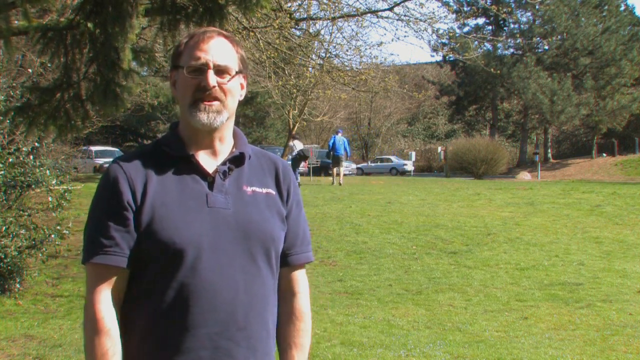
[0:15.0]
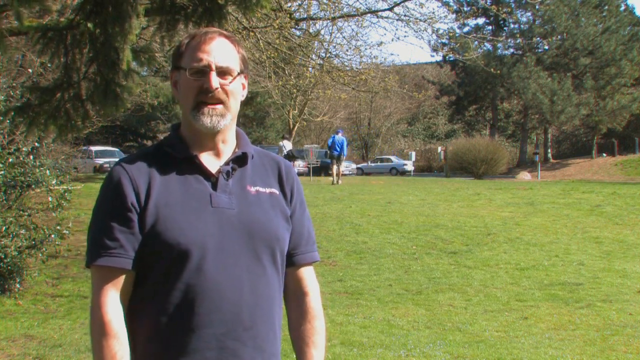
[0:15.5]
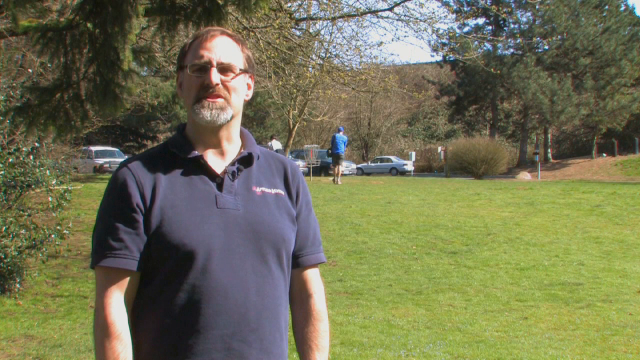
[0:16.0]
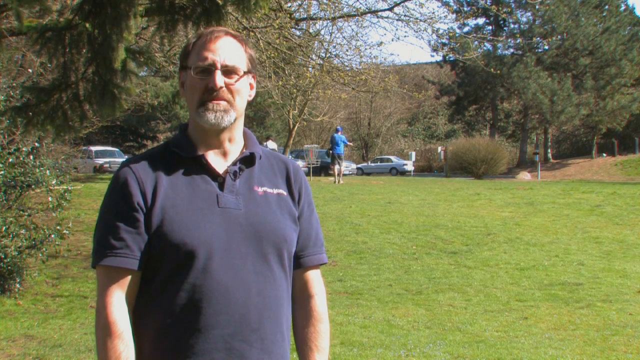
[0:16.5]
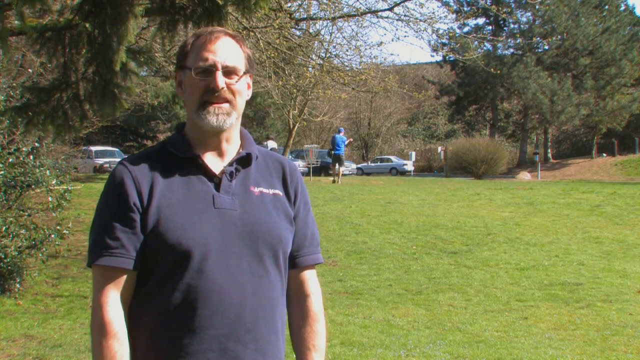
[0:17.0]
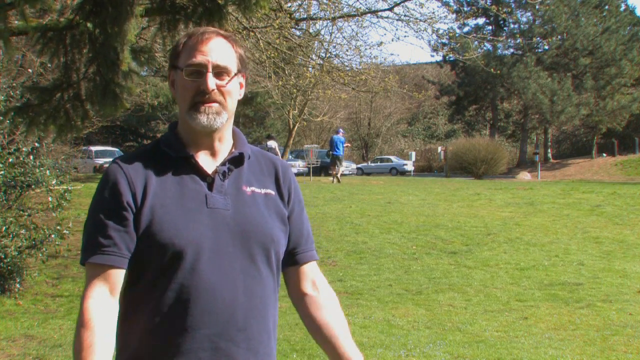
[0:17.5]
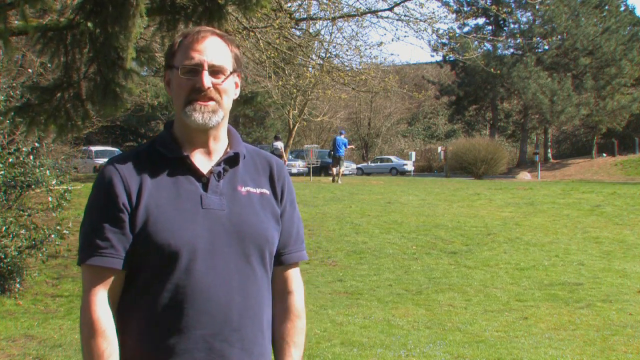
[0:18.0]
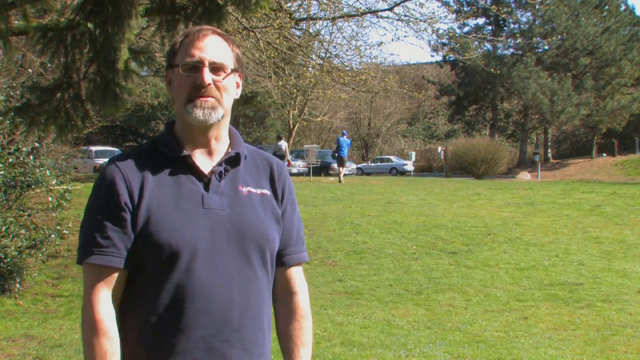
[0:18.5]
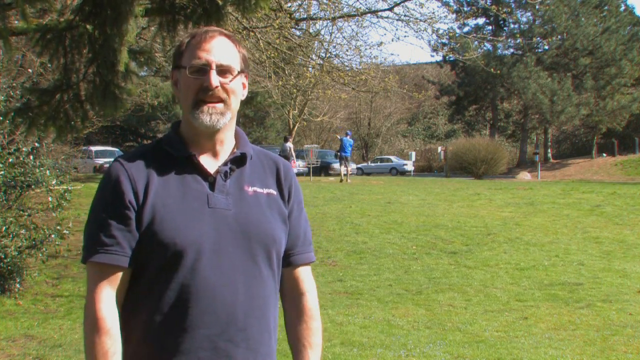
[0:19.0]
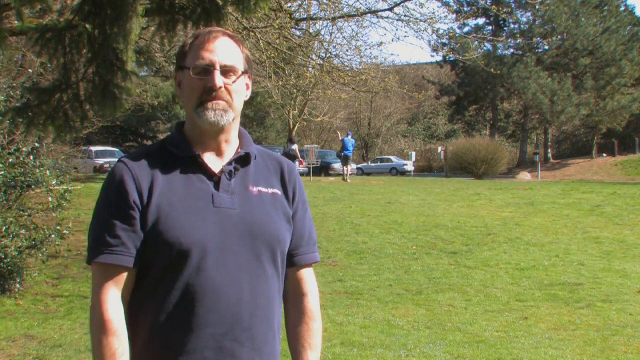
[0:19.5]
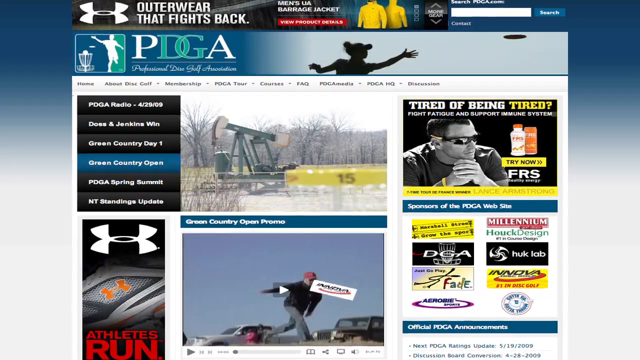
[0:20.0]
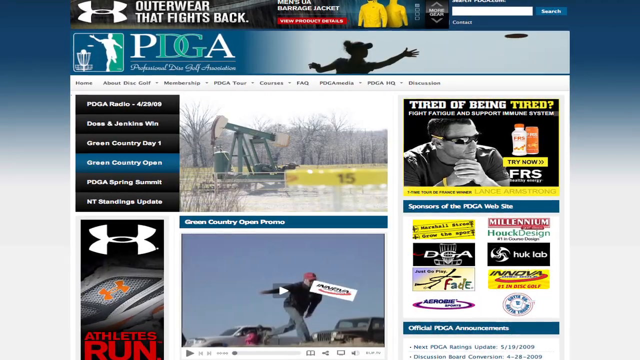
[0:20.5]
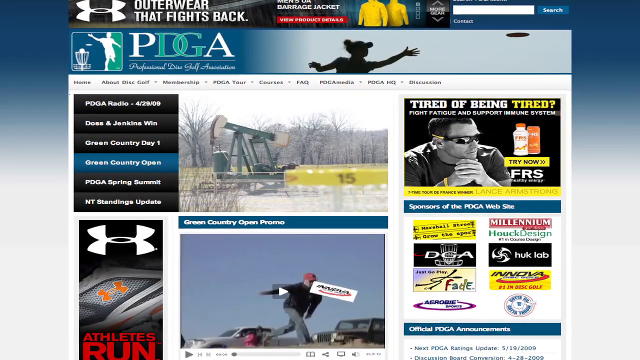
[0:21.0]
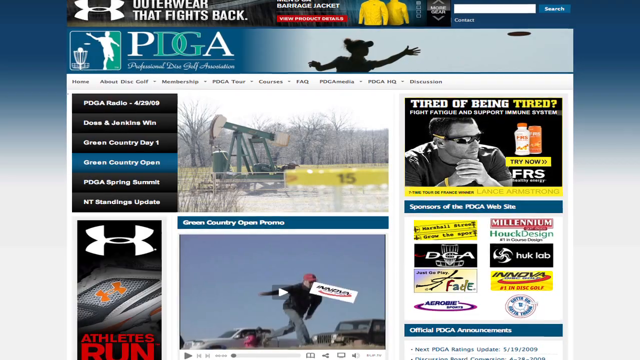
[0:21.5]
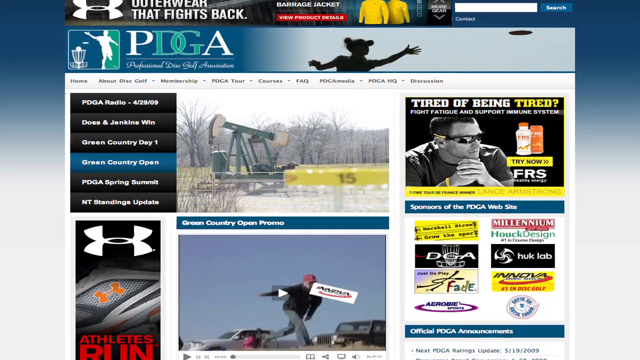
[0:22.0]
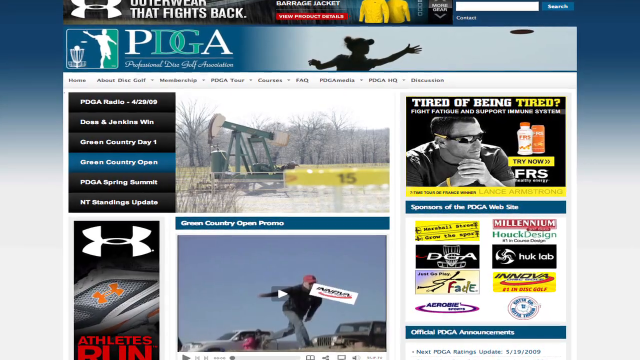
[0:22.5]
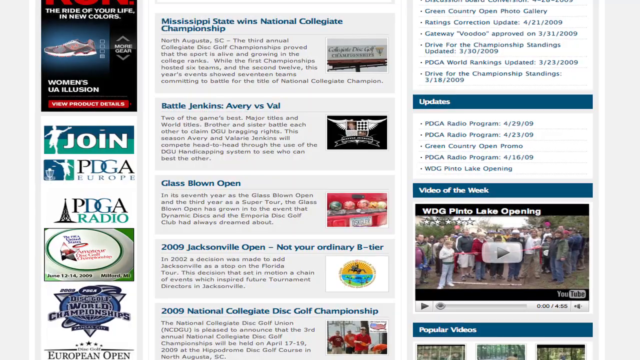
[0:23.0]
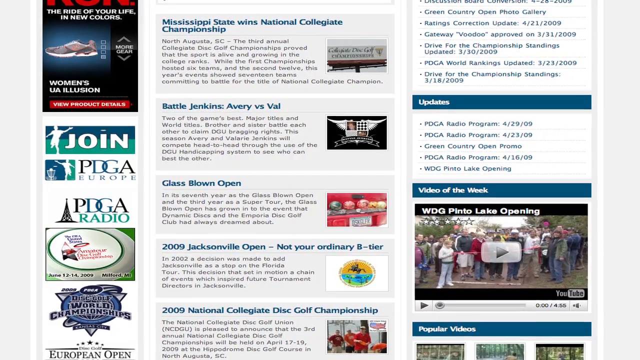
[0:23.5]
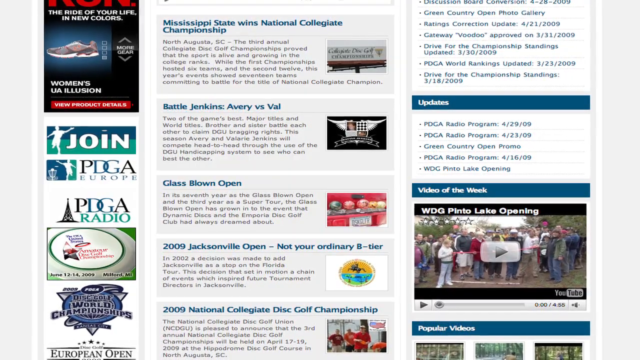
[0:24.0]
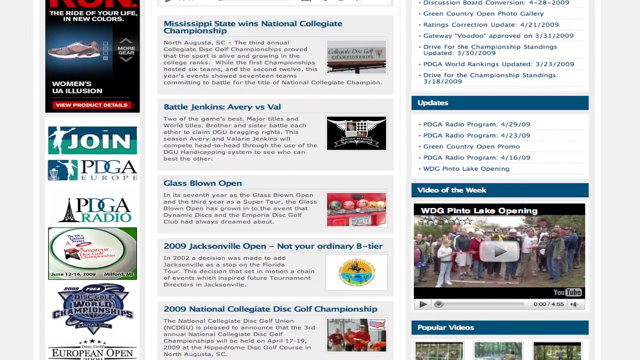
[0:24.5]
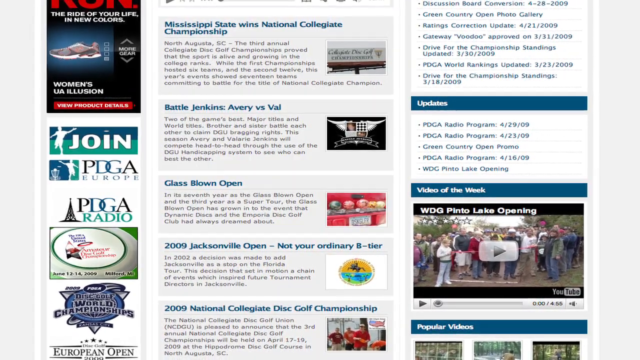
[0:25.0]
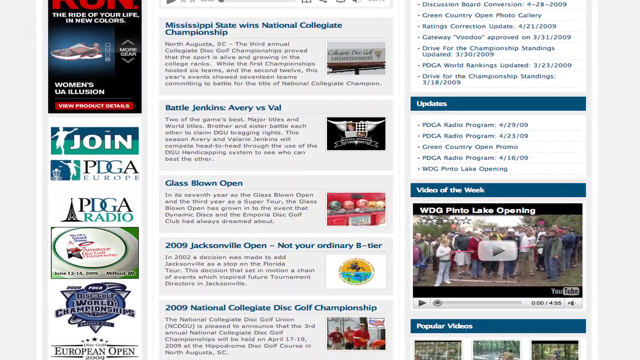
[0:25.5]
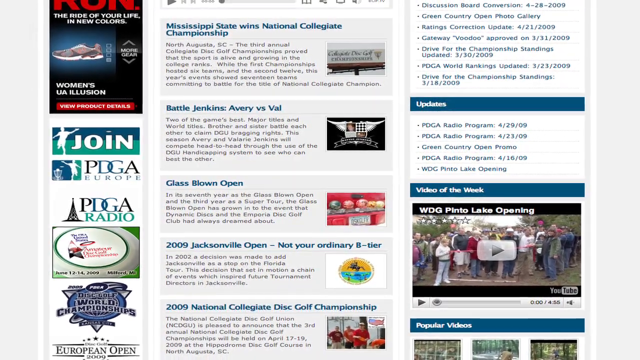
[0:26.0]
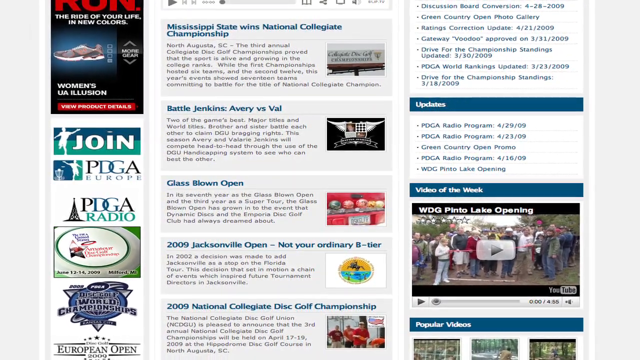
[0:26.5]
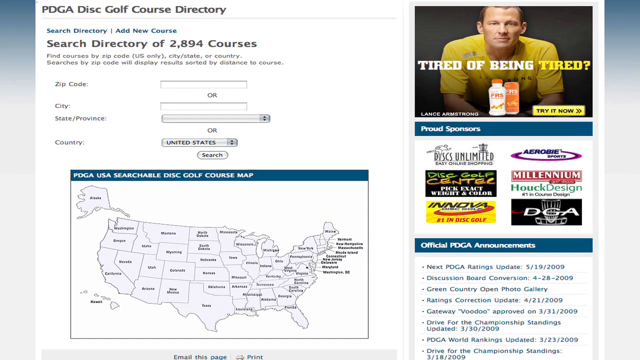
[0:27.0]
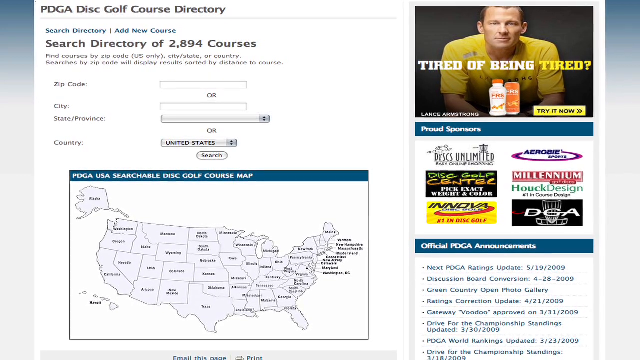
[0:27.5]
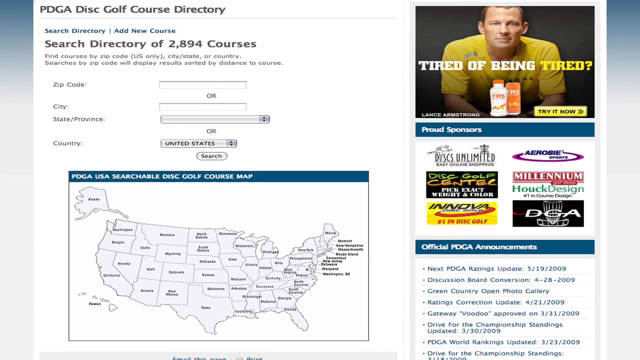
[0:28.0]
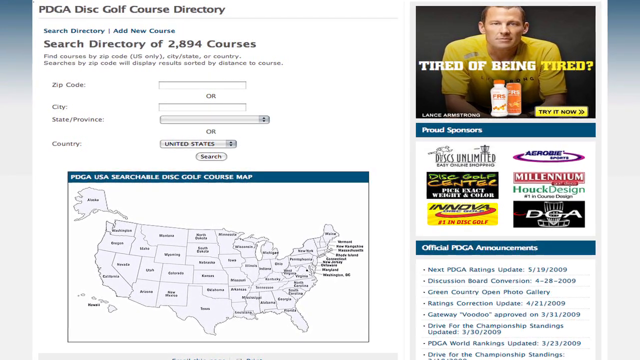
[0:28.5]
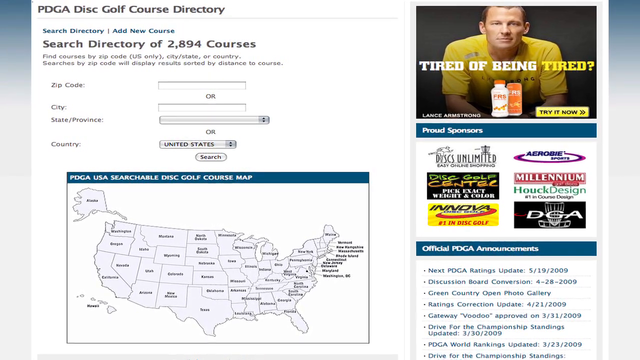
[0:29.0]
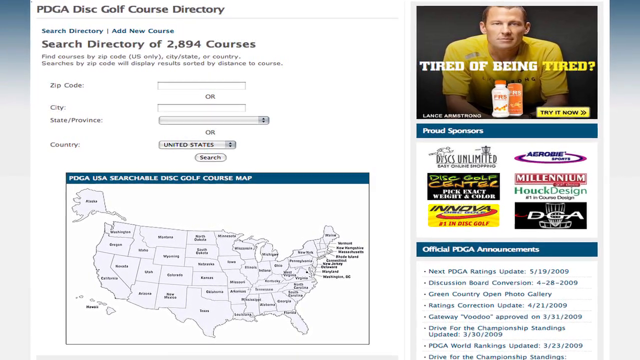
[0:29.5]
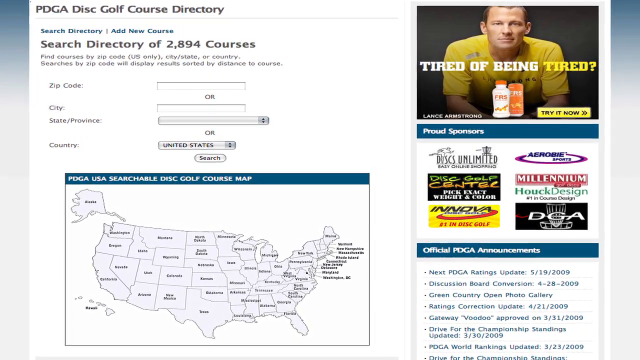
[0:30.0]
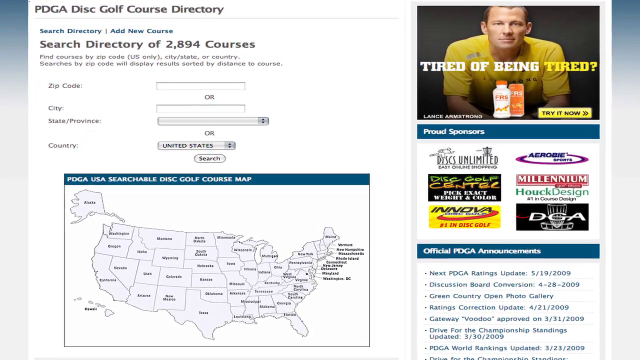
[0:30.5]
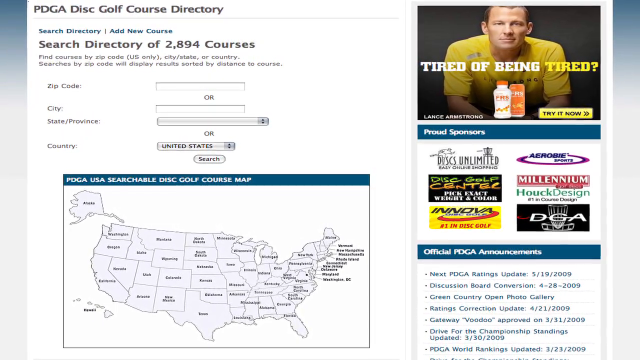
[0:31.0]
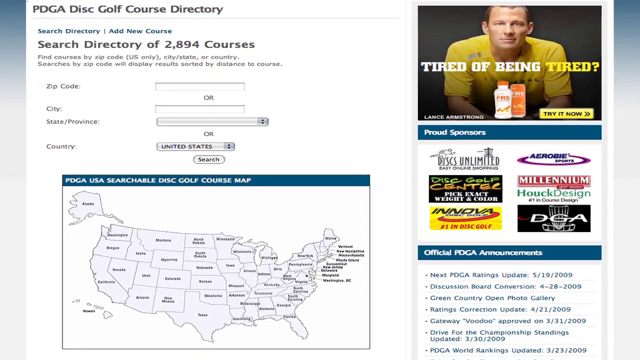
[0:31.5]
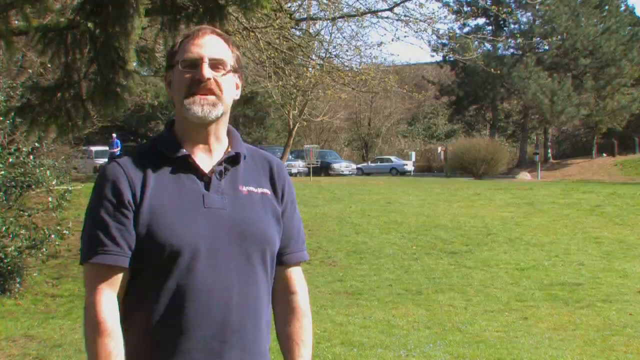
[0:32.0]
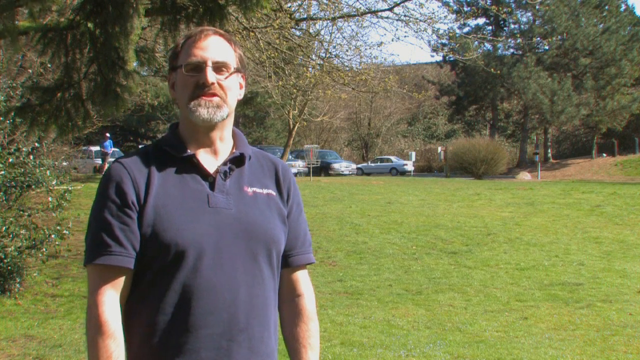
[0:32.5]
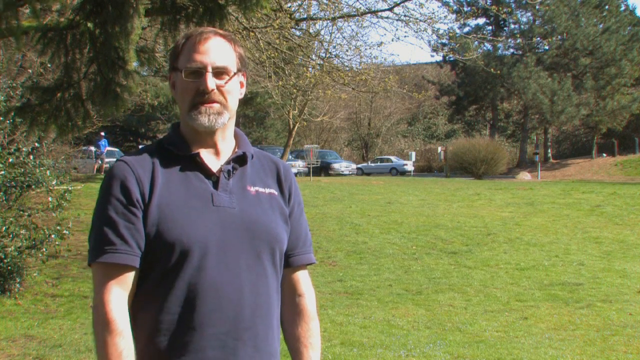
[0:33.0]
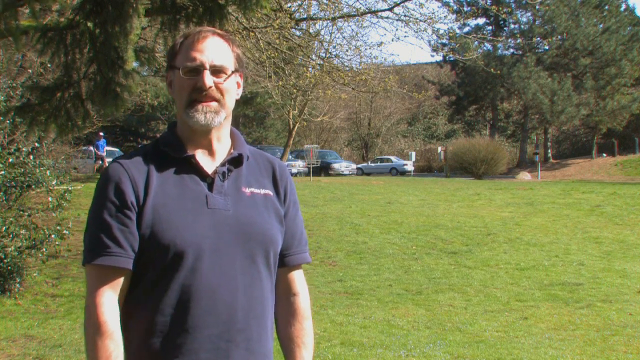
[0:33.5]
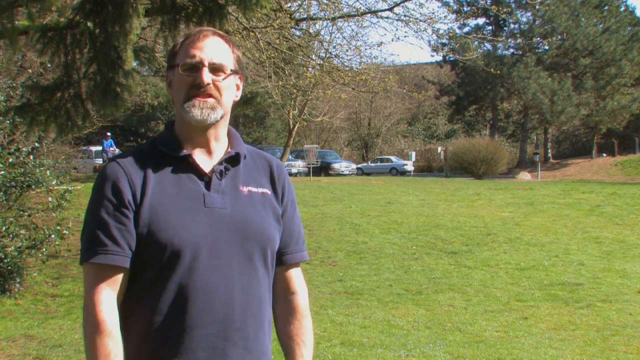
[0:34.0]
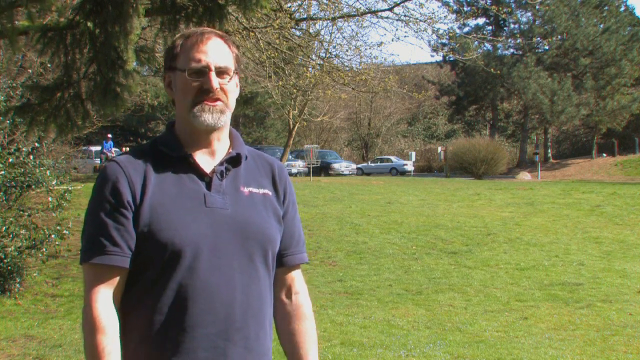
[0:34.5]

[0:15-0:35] The man continues talking in front of the camera, using his hands as he speaks. The video then cuts to multiple frames of what he seems to be explaining: different golf websites and statistics about different golf games, with scores and dates of the games. There also seems to be a map of the United States where one can search for a golf game or field nearby. The screenshots have lots of ads along the side and are panned in and out. People are still walking behind the man, seemingly heading back to the parking lot.